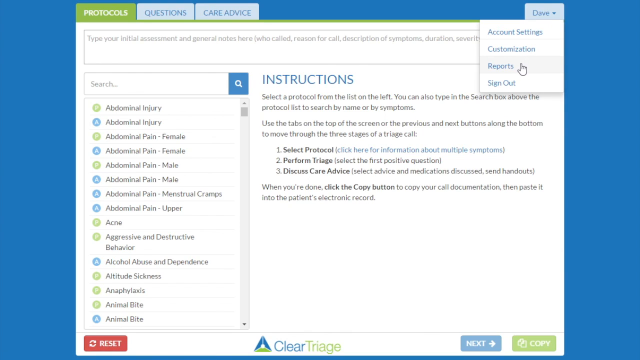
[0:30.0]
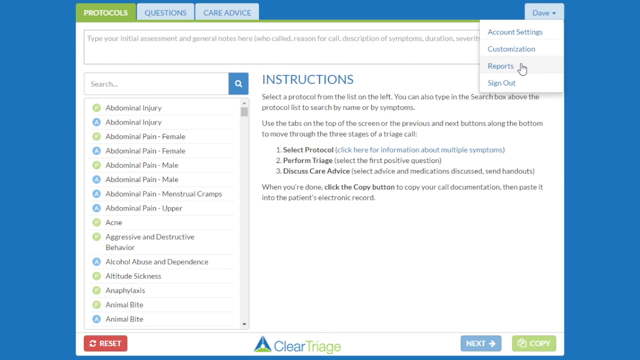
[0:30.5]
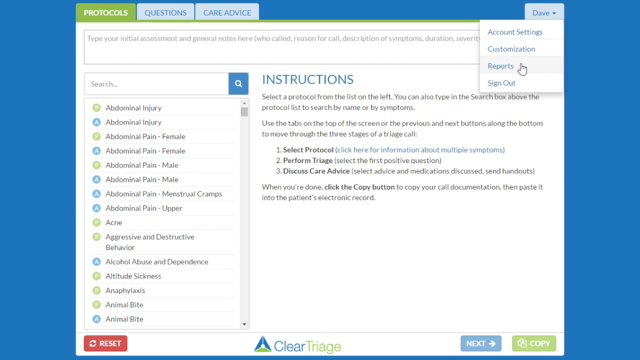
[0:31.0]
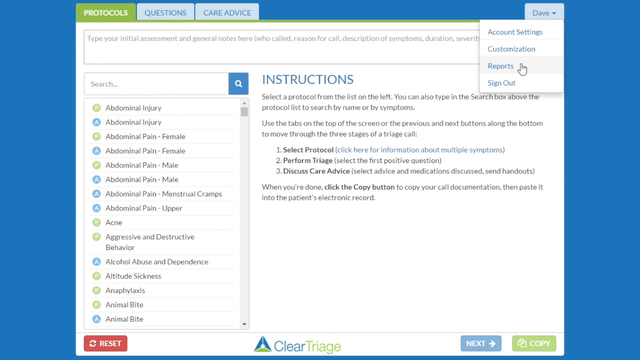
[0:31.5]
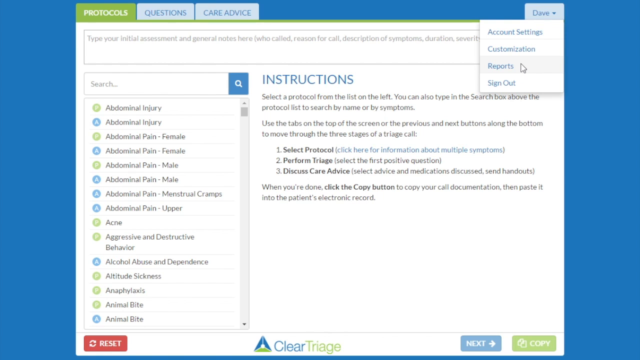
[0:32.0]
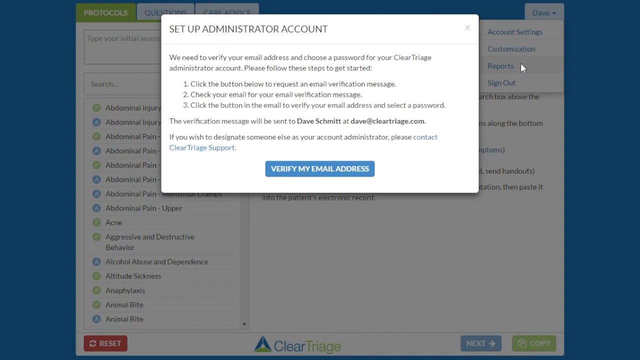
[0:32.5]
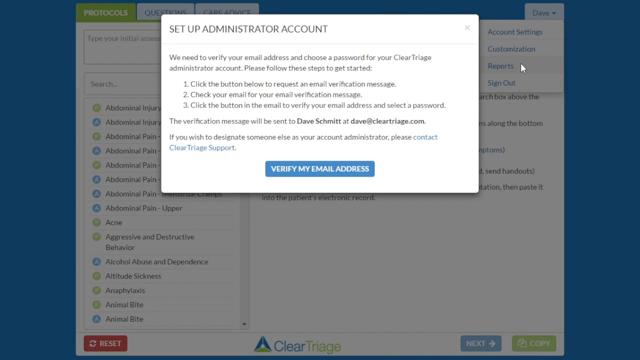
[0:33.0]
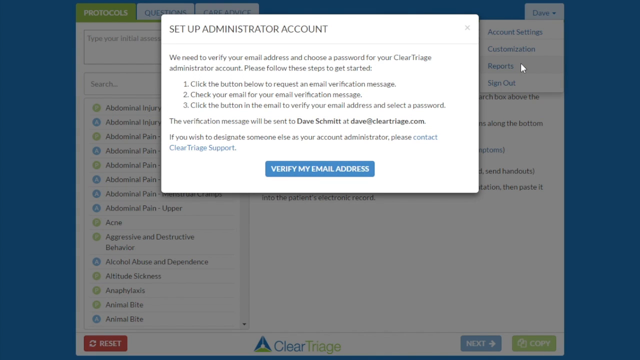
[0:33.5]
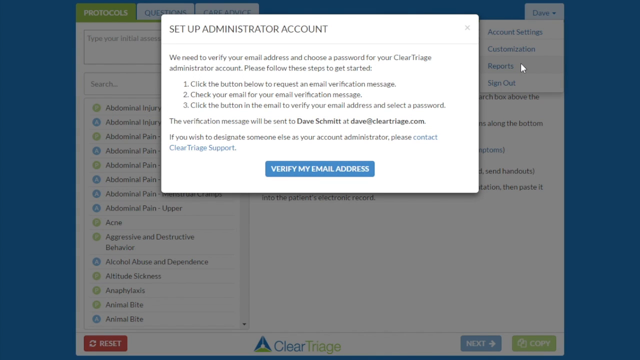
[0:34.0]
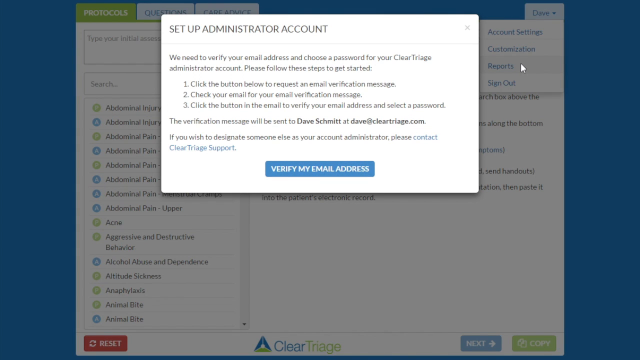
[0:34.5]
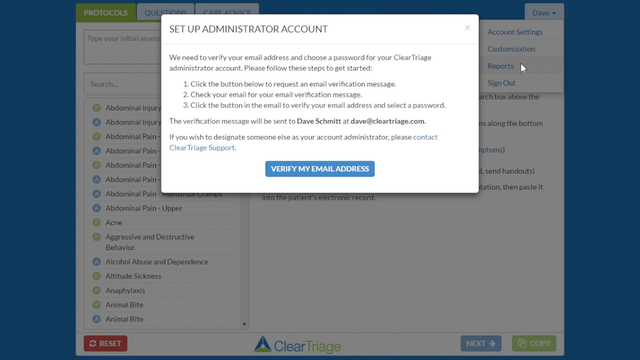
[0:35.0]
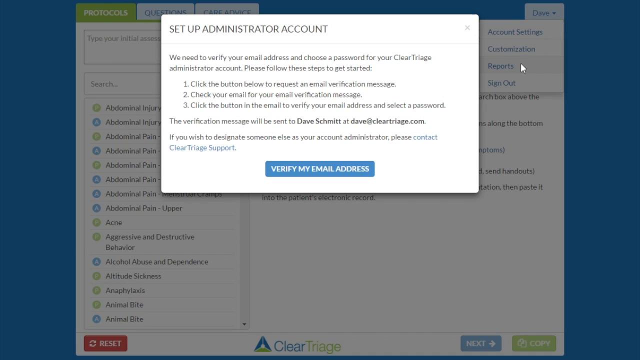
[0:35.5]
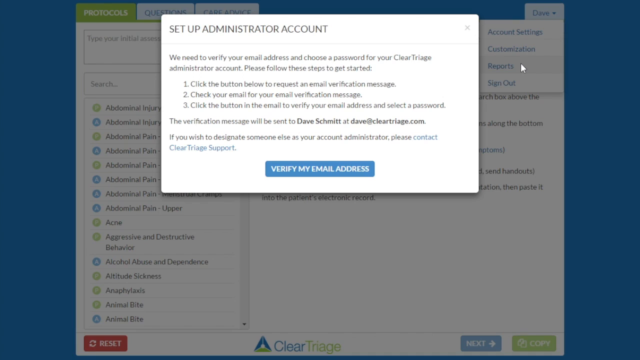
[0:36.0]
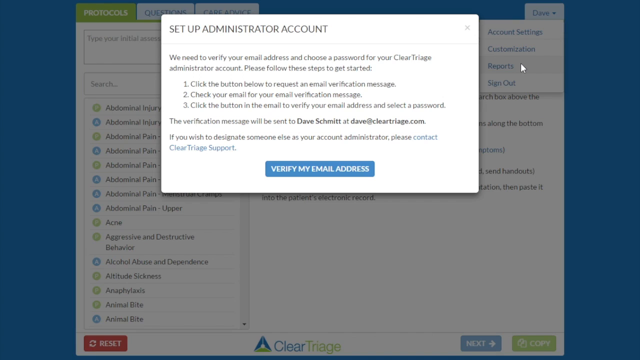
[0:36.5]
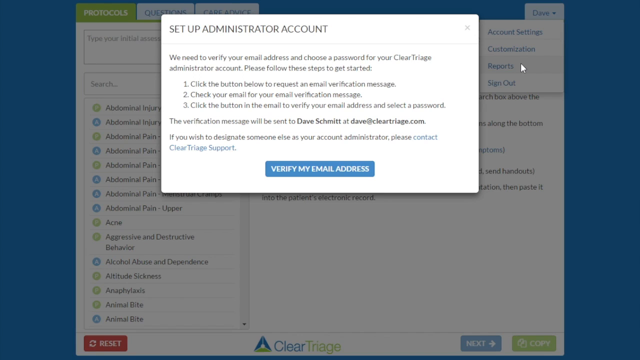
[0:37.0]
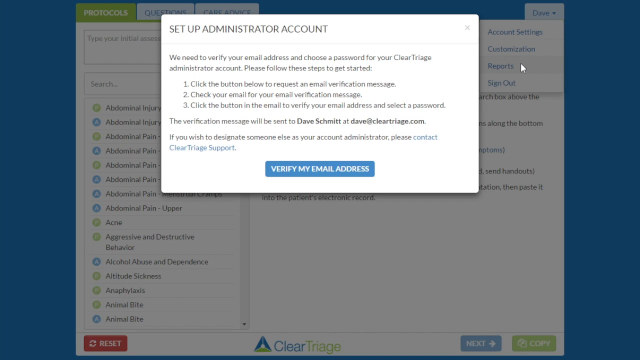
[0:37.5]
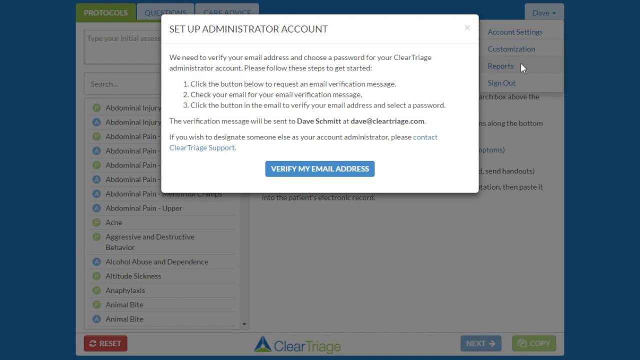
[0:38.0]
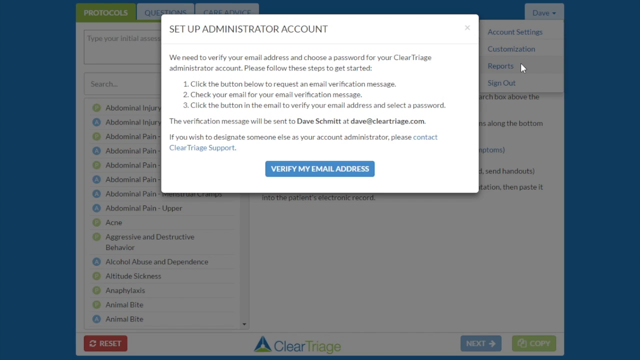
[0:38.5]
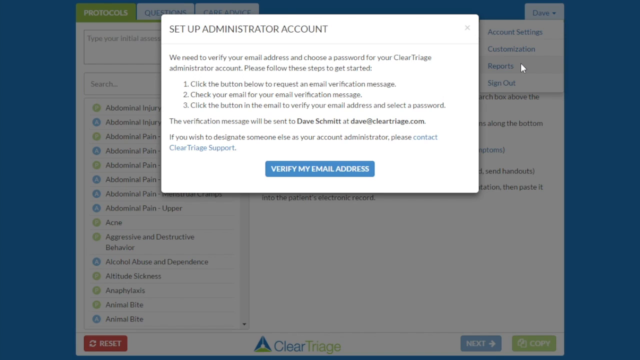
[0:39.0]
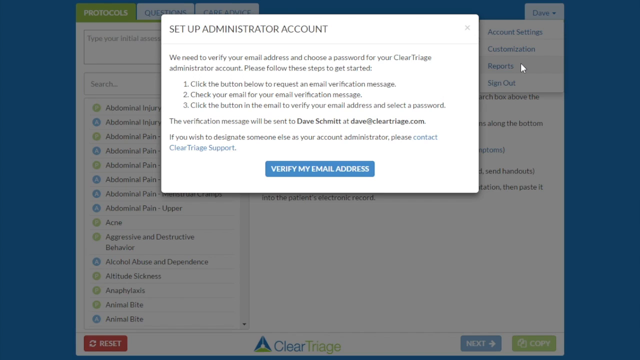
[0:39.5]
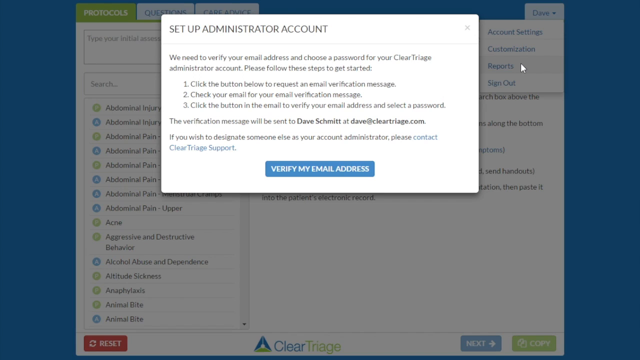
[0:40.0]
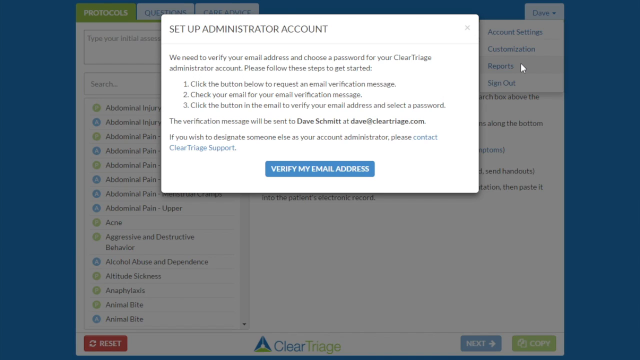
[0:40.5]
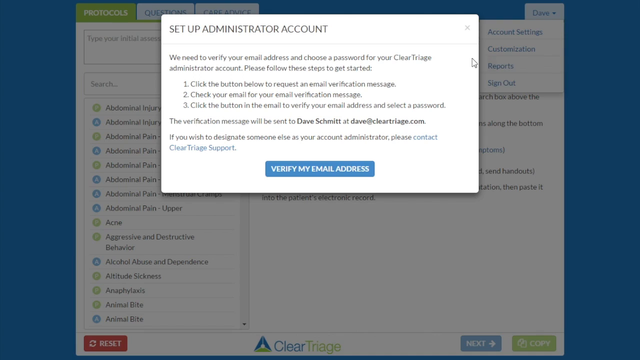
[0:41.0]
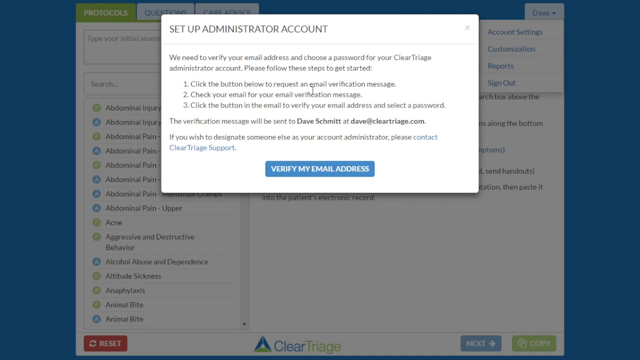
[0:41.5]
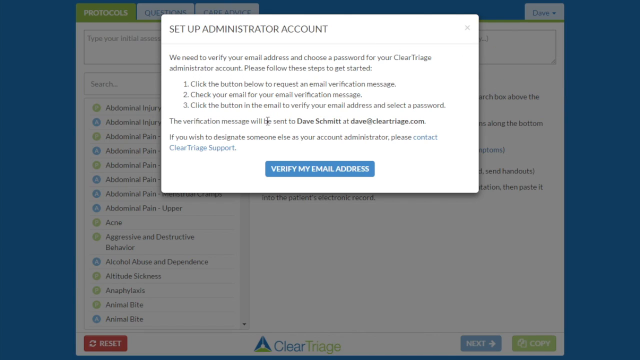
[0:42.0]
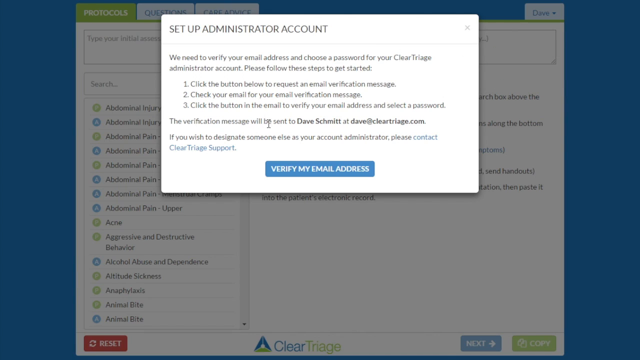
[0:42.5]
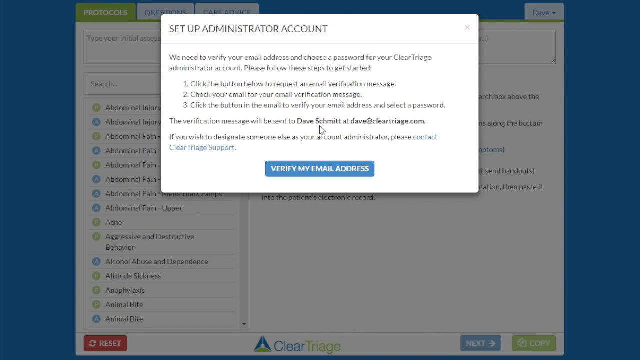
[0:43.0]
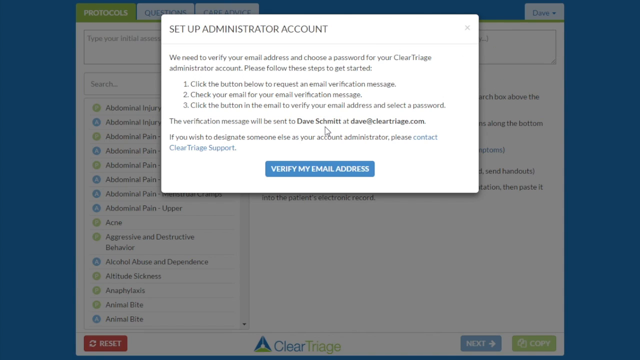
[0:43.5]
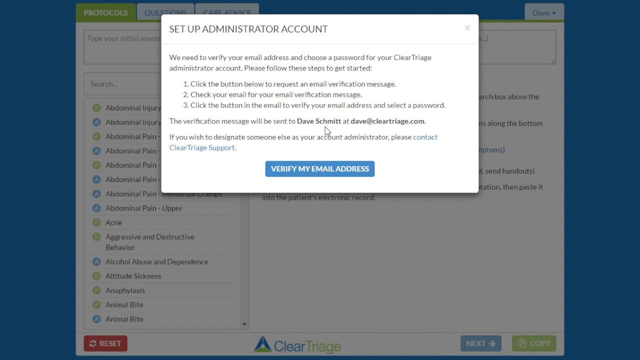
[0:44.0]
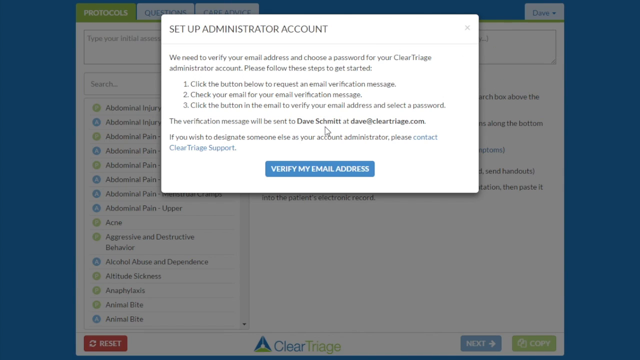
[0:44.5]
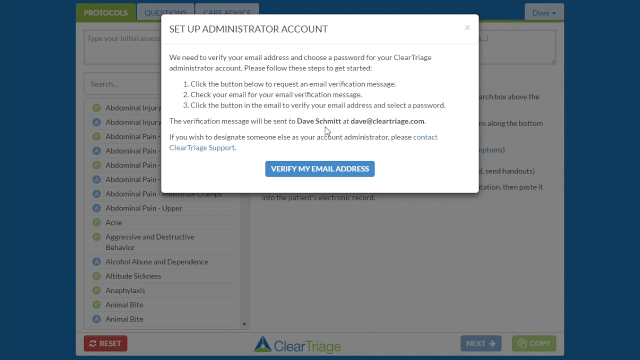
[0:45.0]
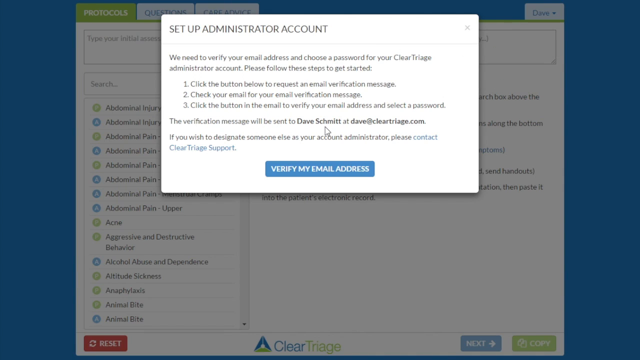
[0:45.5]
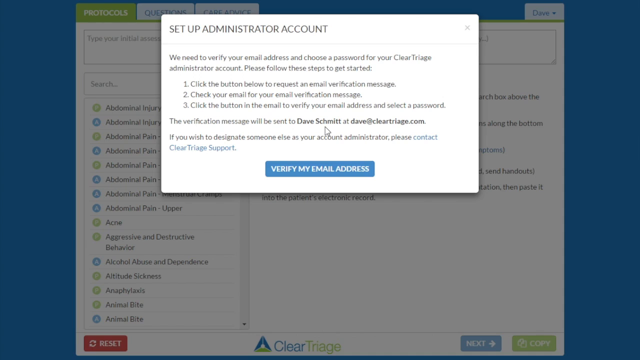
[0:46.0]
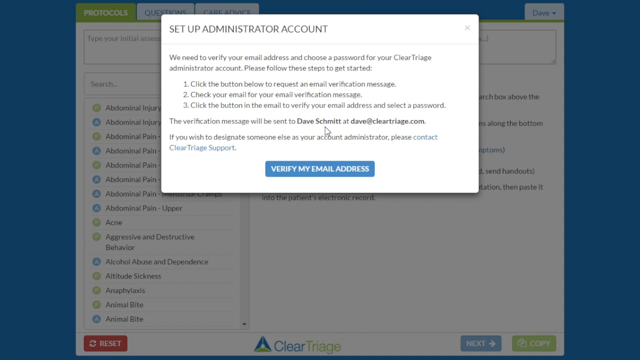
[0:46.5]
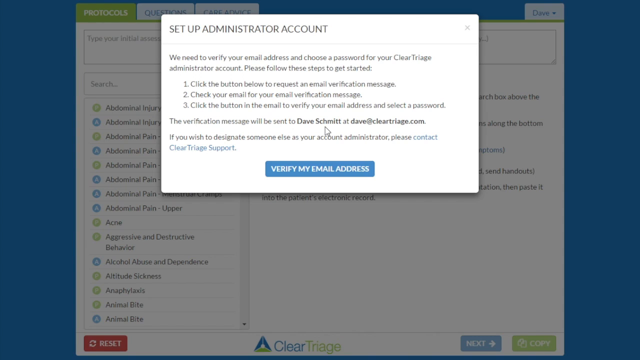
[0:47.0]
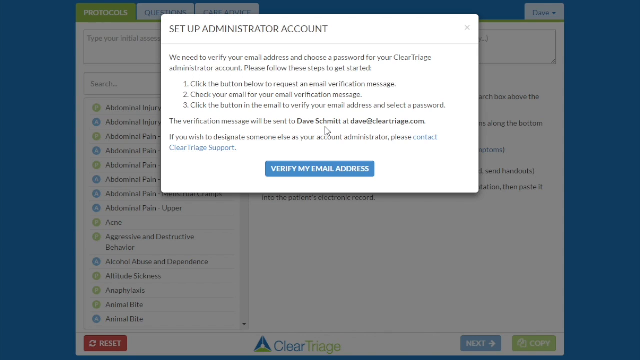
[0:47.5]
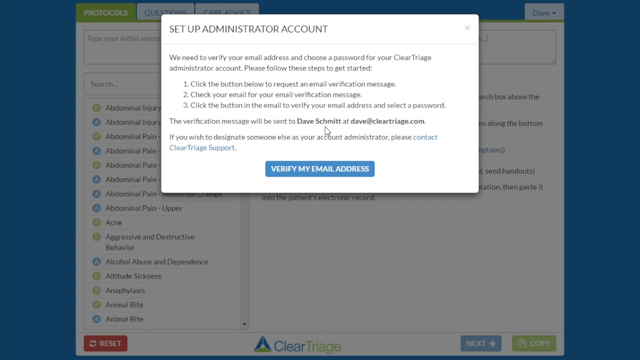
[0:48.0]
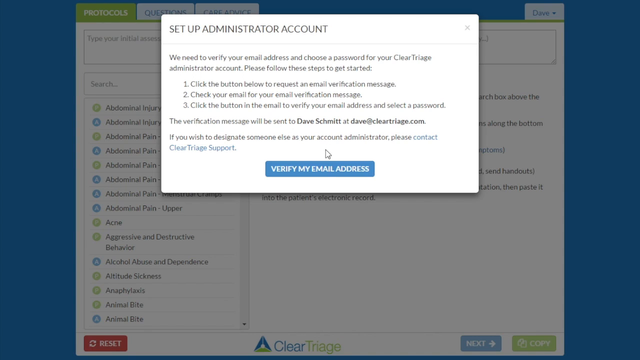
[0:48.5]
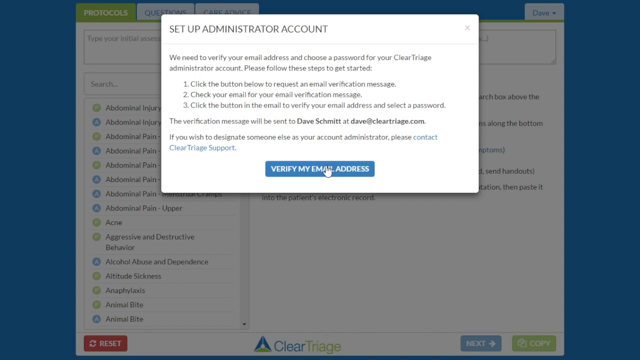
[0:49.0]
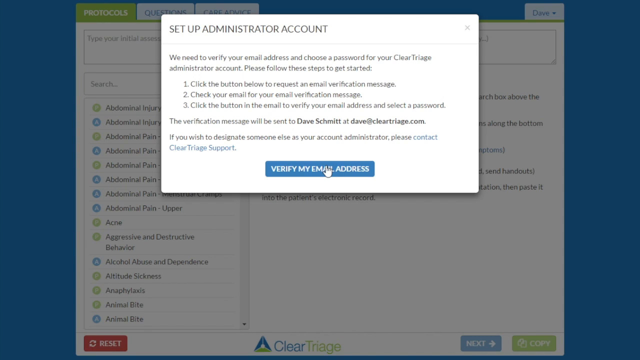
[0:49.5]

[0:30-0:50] On the patient care protocol instructions page, with the alphabetical list of conditions on the left, the mouse has clicked the "Dave" tab at the top right and chosen reports from the options account settings, customisation, reports and sign out. A separate section pops up titled "set up administrator account". It reads: "we need to verify your email address and choose a password for your clear triage administrator account. Please follow these steps to get started. One, click the button below to request an email verification message. Two, check your email for your email verification message. Three, click the button in the email to verify your email address and select a password." It states that the verification message will be sent to Dave Schmidt at dave@cleartriage.com, and that to designate someone else as the account administrator, the user should contact clear triage support. Below is a blue button reading "verify my email address". The mouse hovers over the name Dave Schmidt in this section and then clicks "verify my email address".